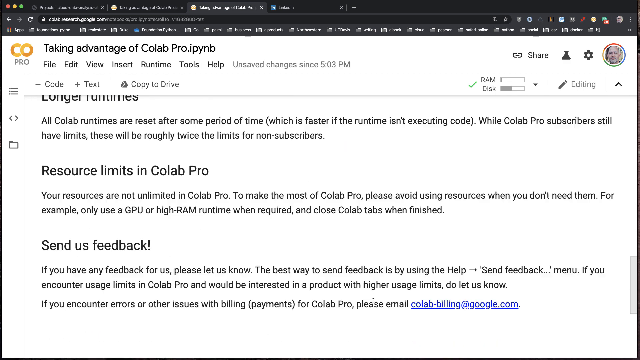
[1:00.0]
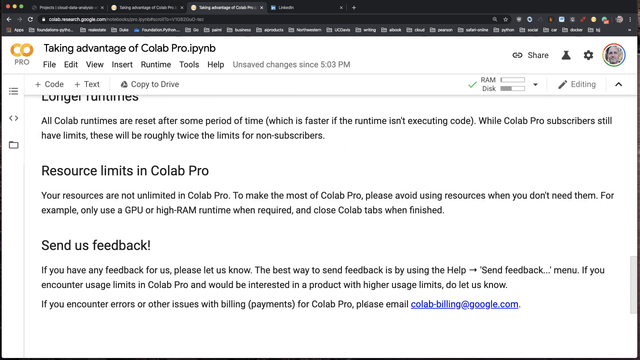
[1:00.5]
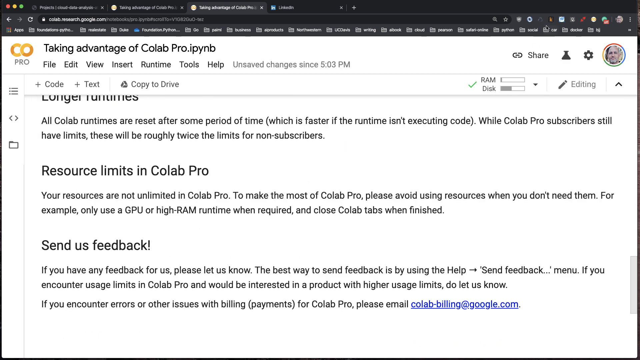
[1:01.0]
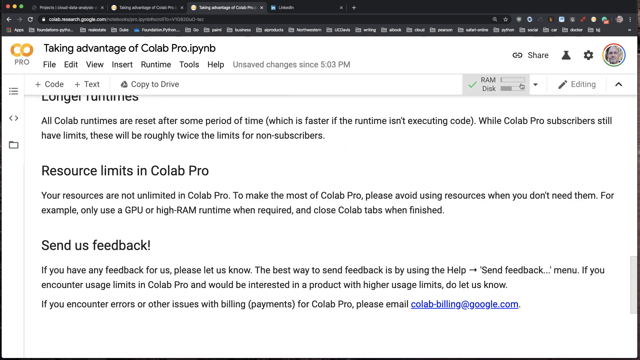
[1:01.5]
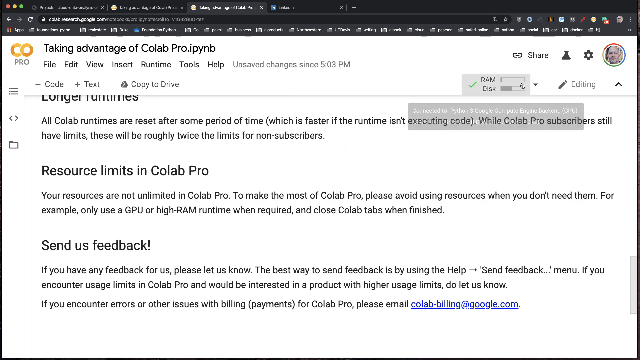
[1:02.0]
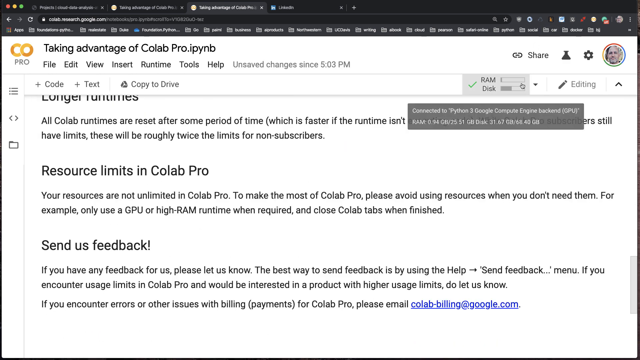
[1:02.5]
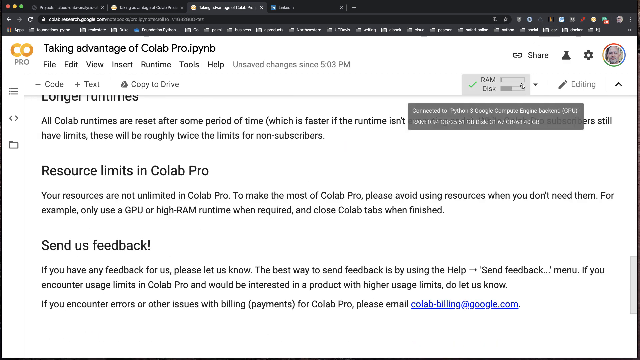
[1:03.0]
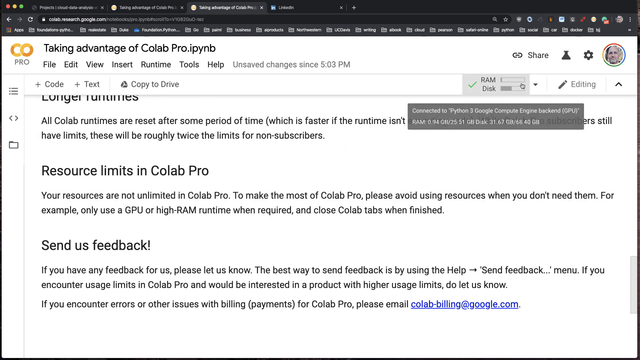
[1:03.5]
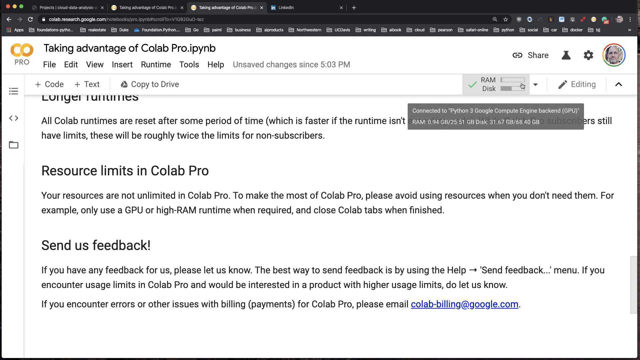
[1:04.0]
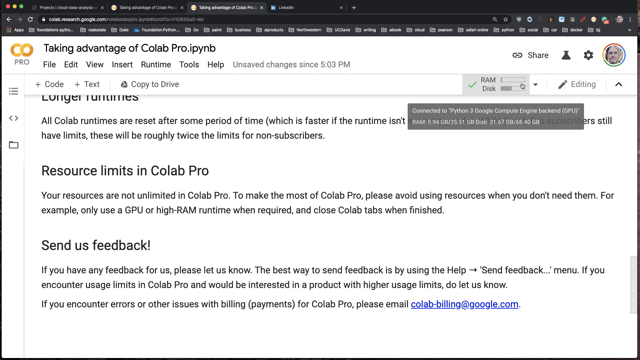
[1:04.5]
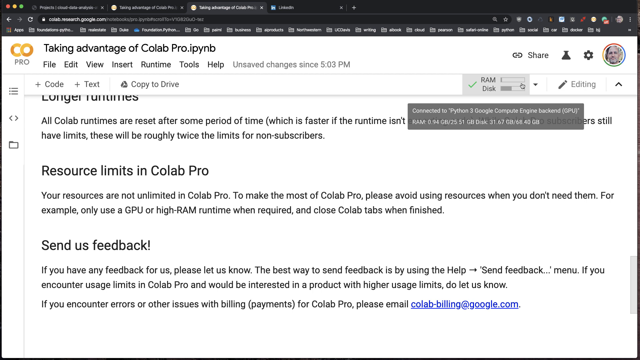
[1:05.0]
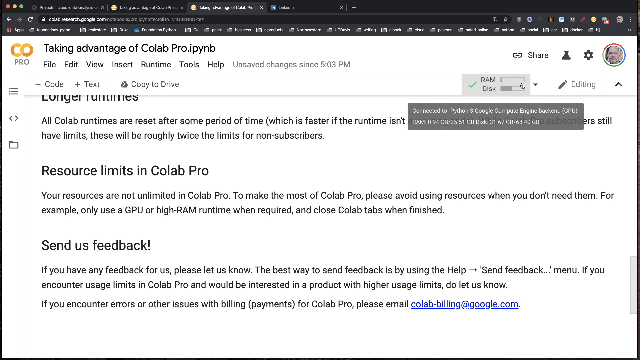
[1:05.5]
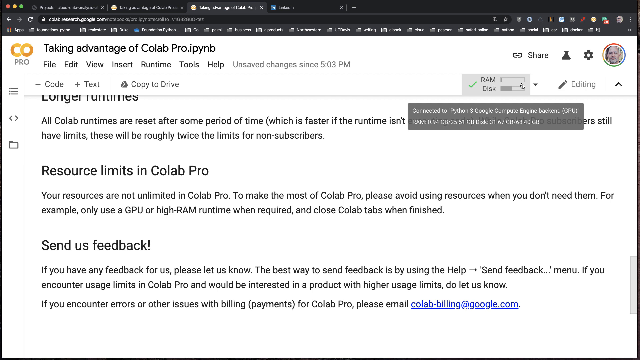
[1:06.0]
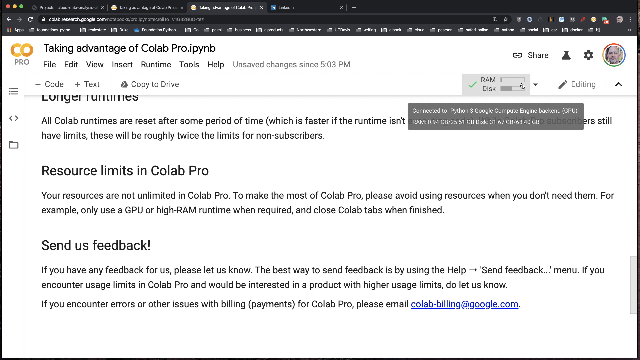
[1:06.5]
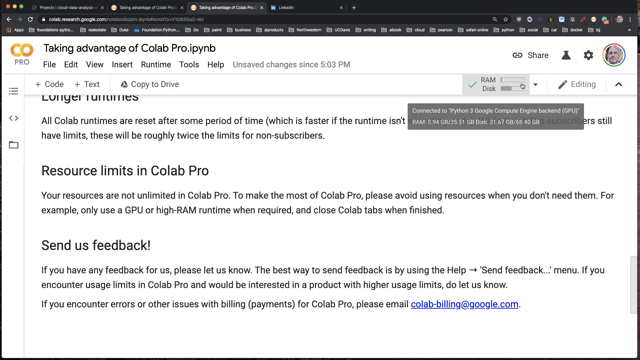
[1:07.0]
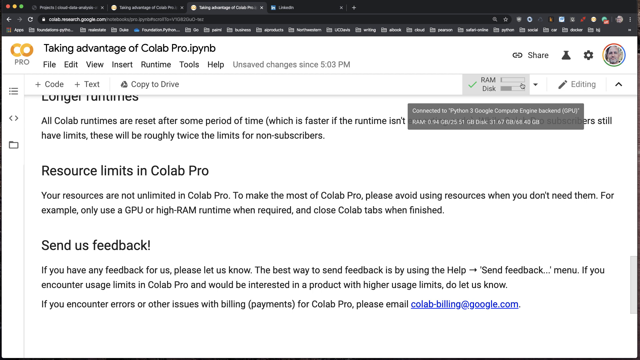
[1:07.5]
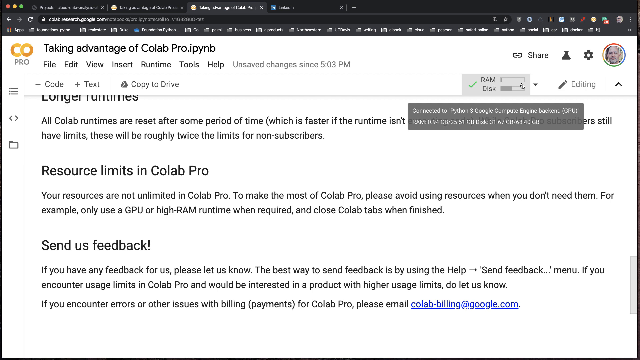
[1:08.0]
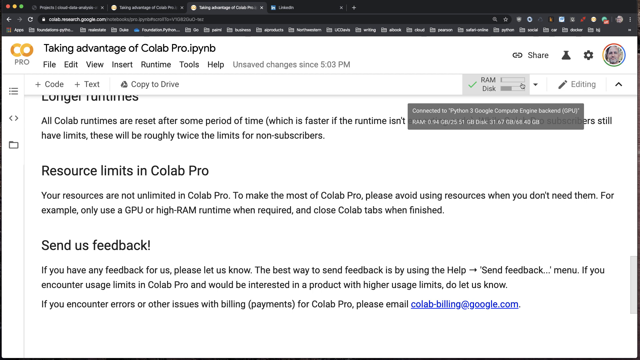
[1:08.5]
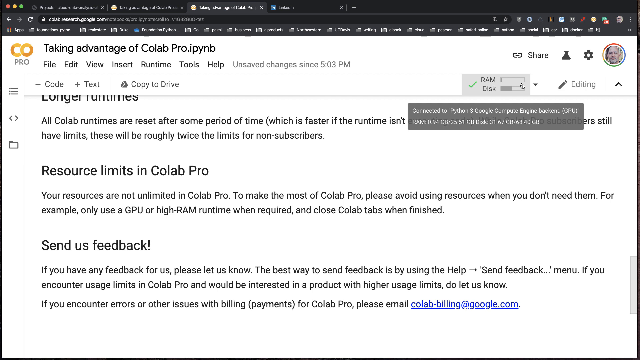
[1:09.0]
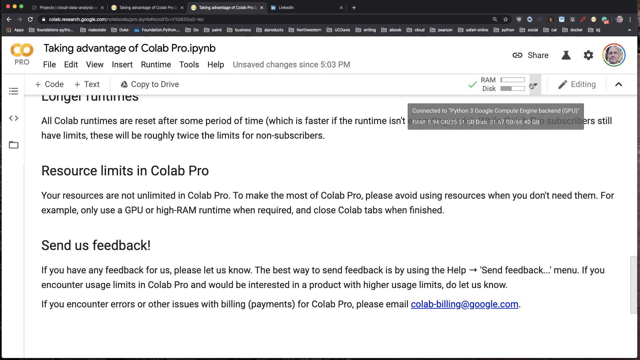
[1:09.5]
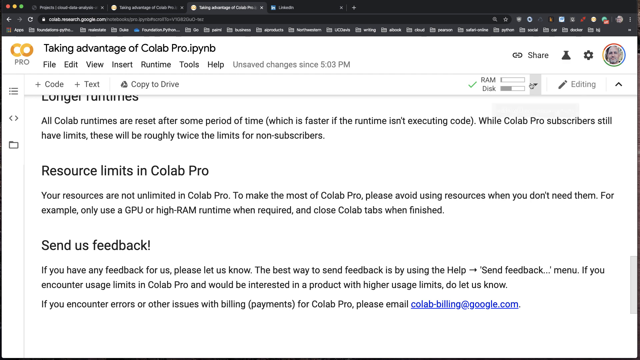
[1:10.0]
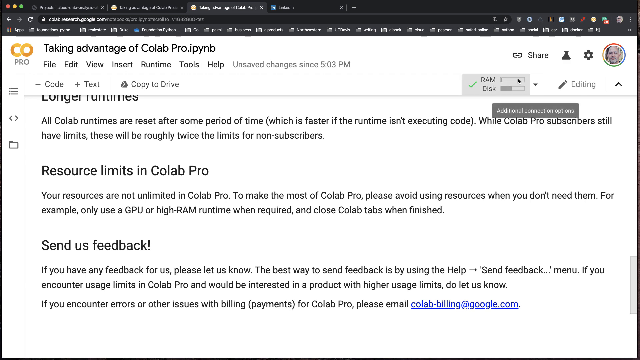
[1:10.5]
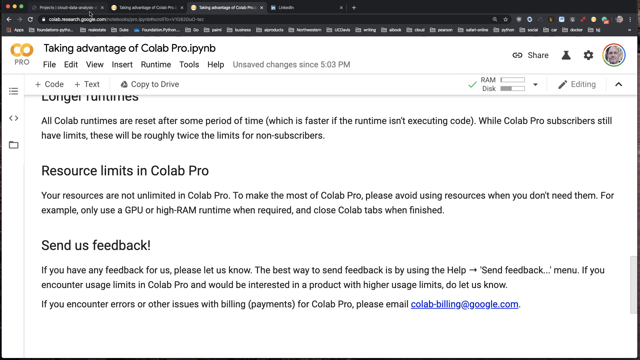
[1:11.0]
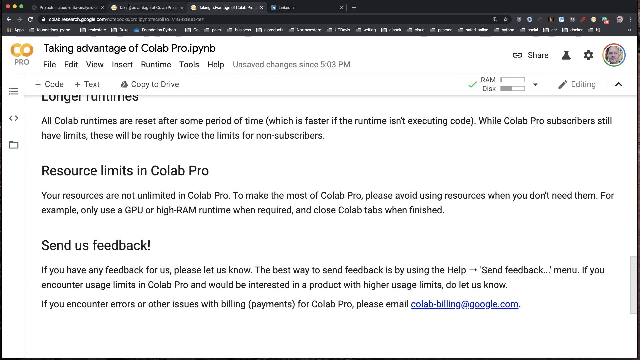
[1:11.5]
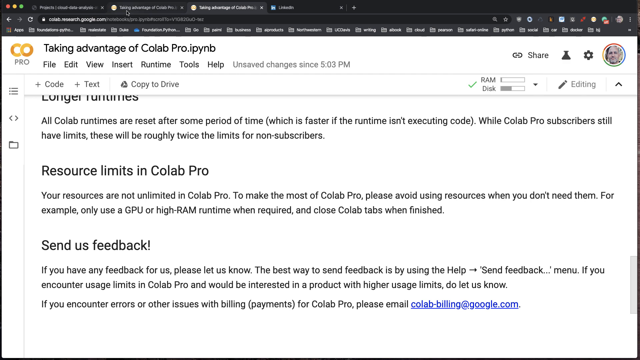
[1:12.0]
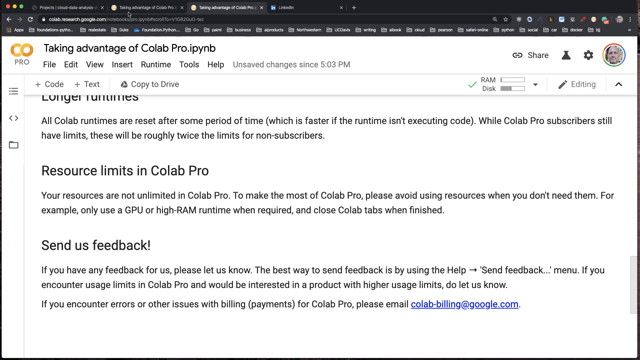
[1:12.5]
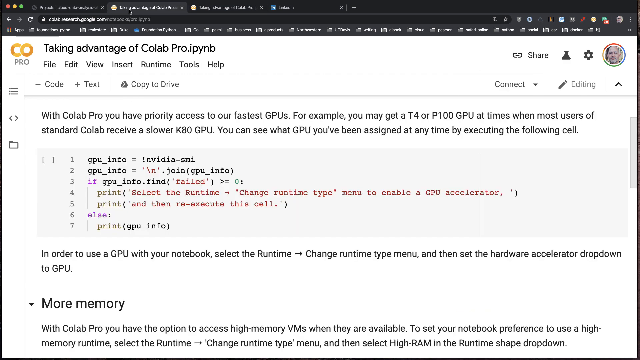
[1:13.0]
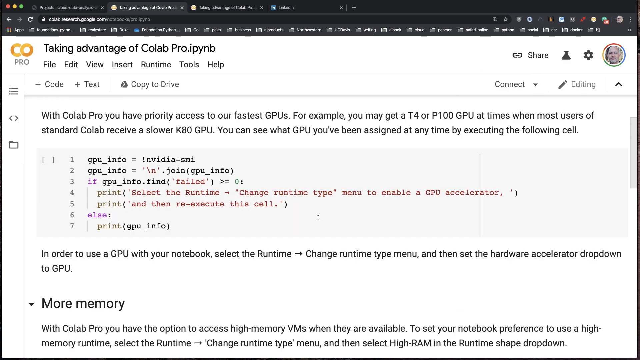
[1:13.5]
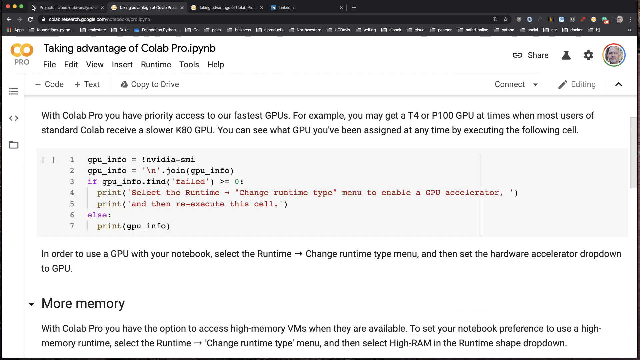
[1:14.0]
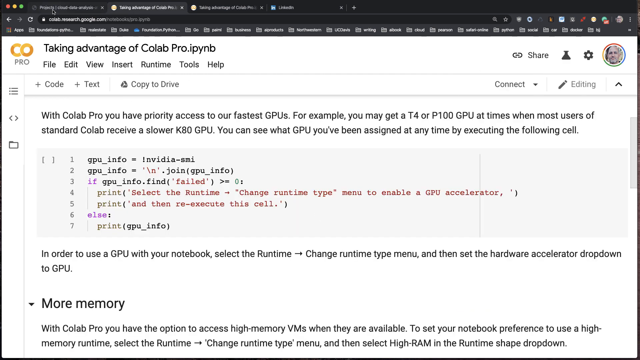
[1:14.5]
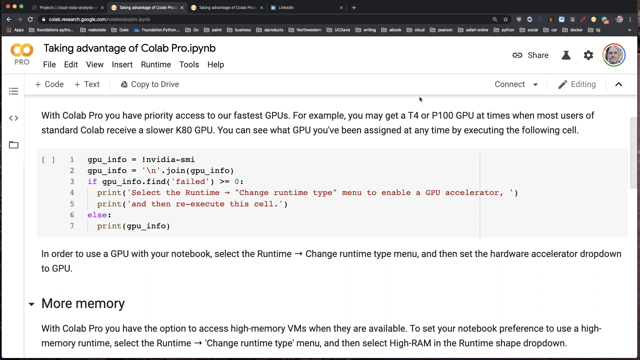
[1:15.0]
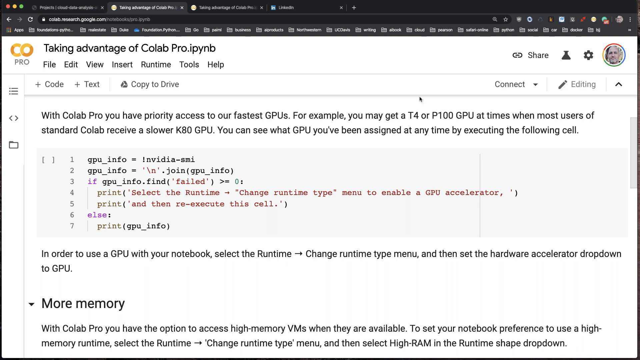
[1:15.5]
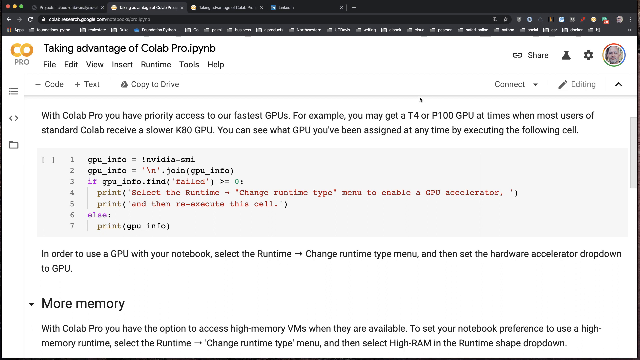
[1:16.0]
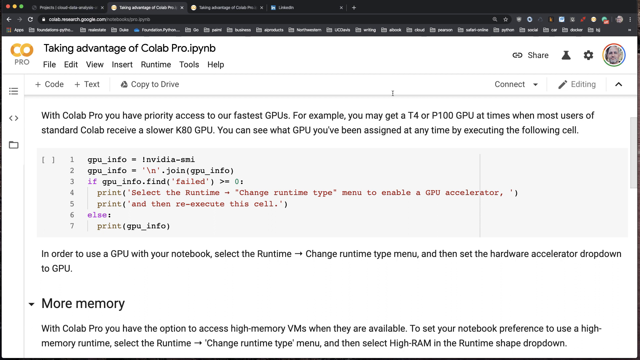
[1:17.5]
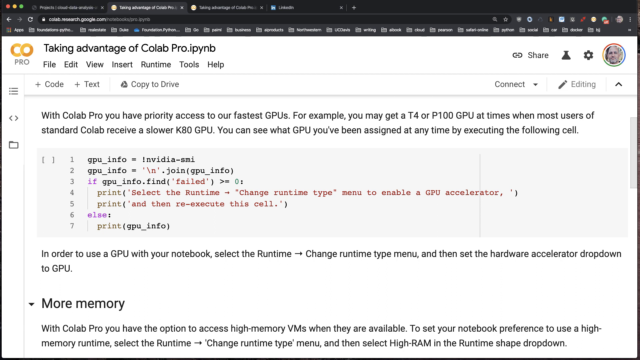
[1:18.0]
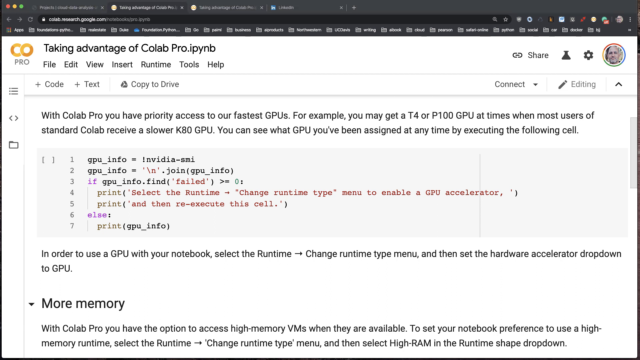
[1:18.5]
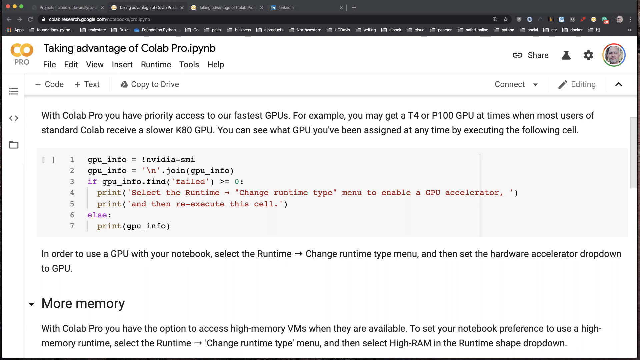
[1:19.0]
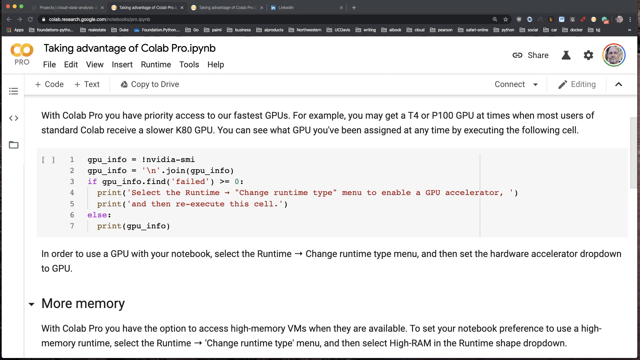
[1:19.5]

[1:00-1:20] A slightly different page reads "longer runtimes, all collab runtimes are reset after some period of time, which is faster if the runtime isn't executing code. While Collab Pro subscribers still have limits, these will be roughly twice the limits for non-subscribers." Another section reads "resource limits in Collab Pro, your resources are not unlimited in Collab Pro. To make the most of Collab Pro, please avoid using resources when you don't need them. For example, only use a GPU or high RAM runtime when required and close Collab tabs when finished." A "send us feedback" option appears. The cursor looks like it moves around the RAM setting as the man goes through the settings, setting up his resource limits in the drop-down menu. NVIDIA appears as well.